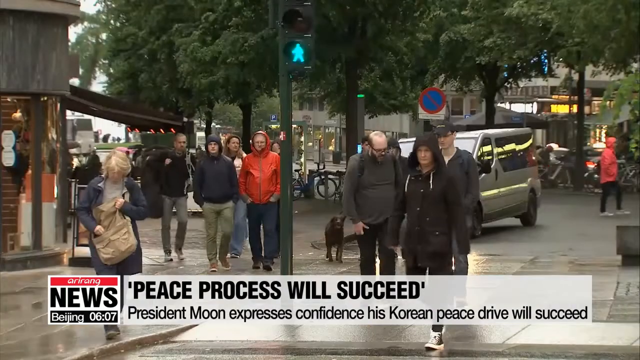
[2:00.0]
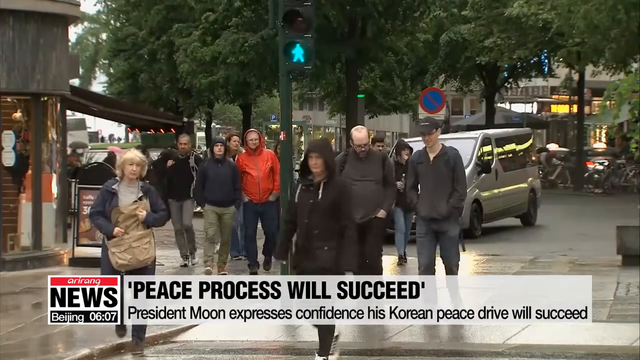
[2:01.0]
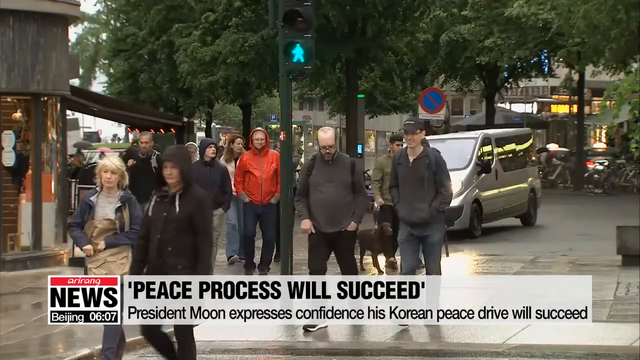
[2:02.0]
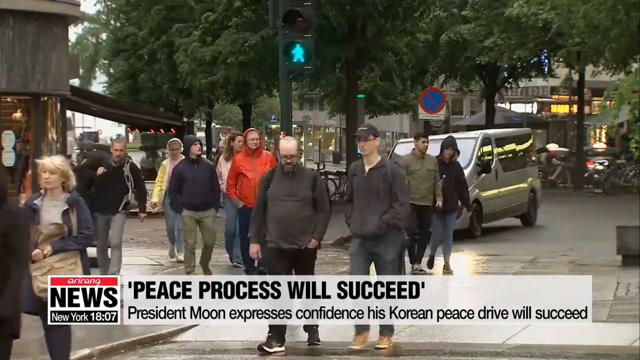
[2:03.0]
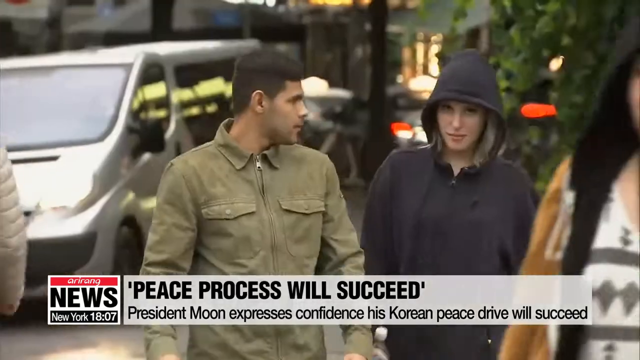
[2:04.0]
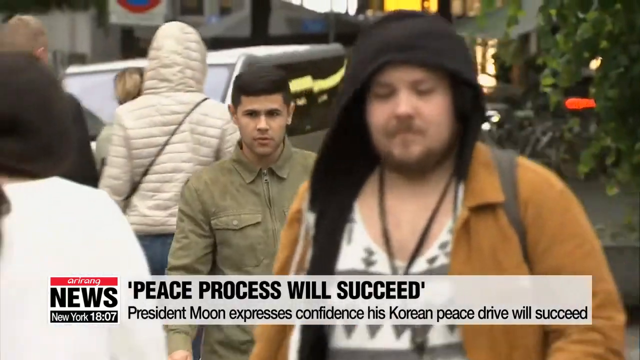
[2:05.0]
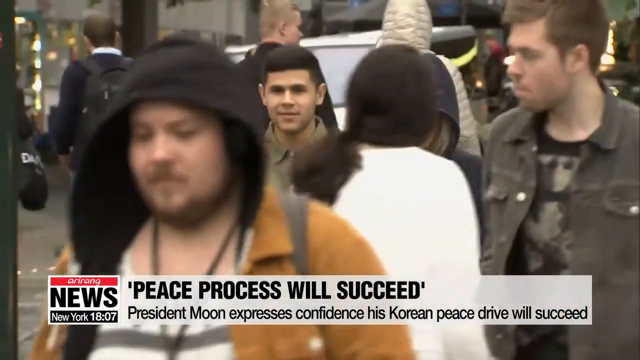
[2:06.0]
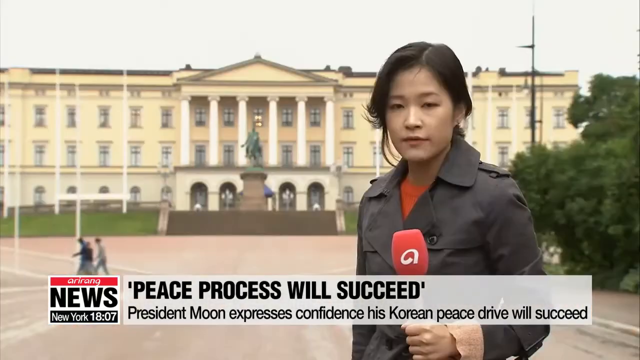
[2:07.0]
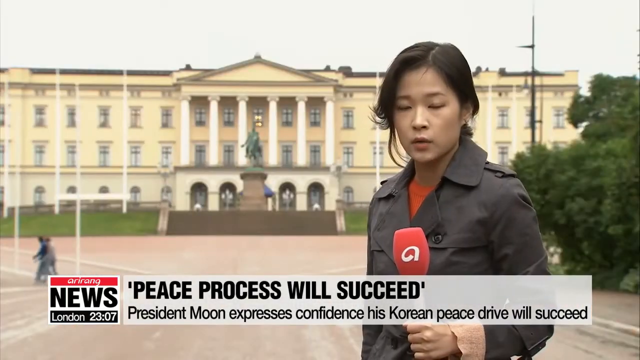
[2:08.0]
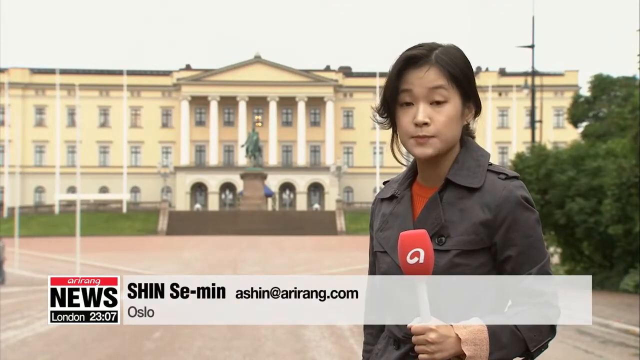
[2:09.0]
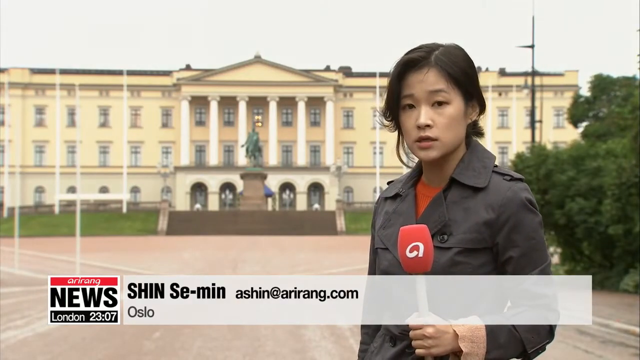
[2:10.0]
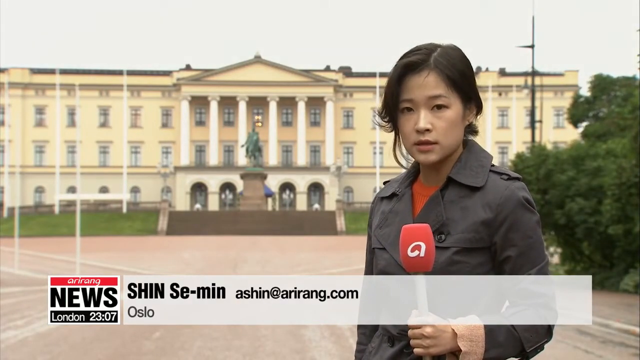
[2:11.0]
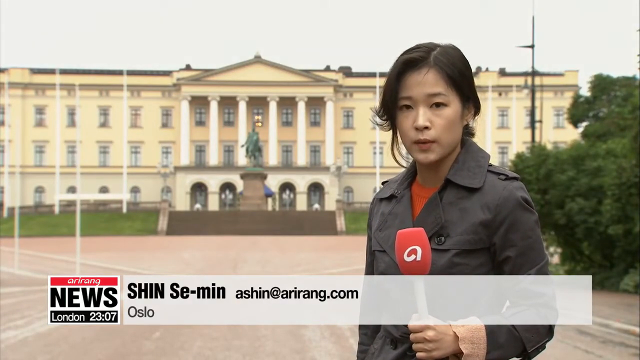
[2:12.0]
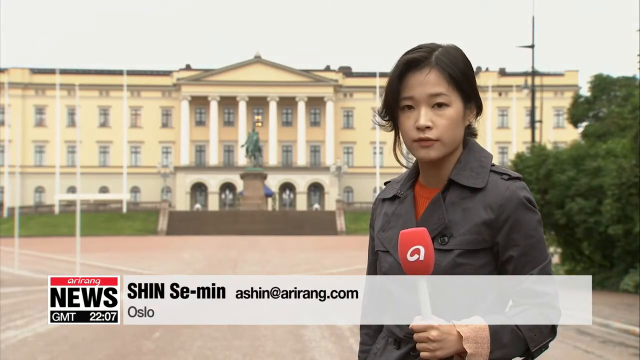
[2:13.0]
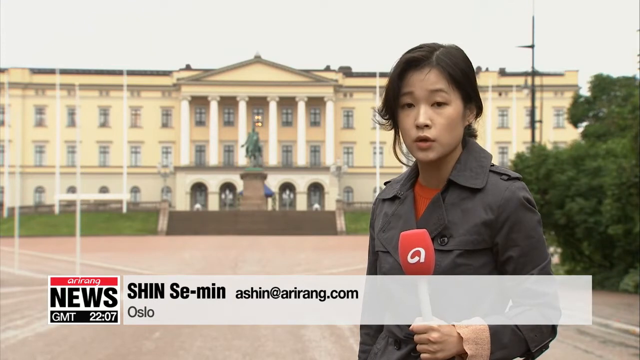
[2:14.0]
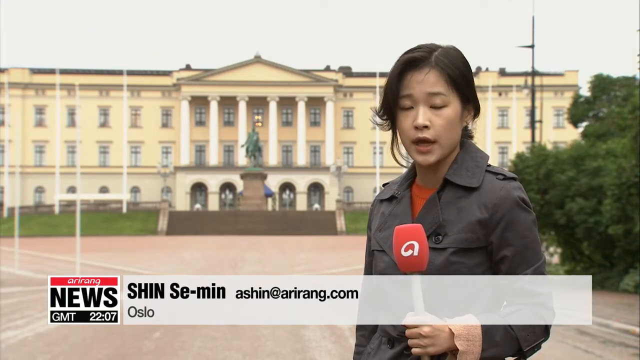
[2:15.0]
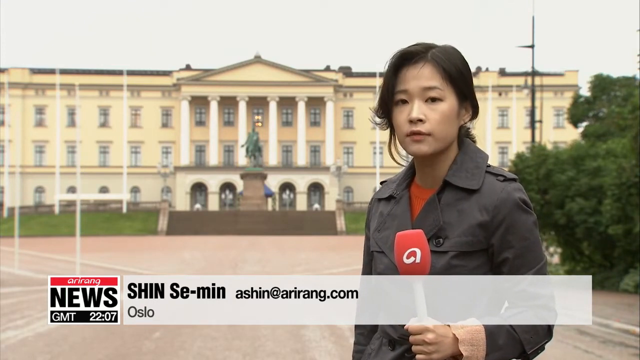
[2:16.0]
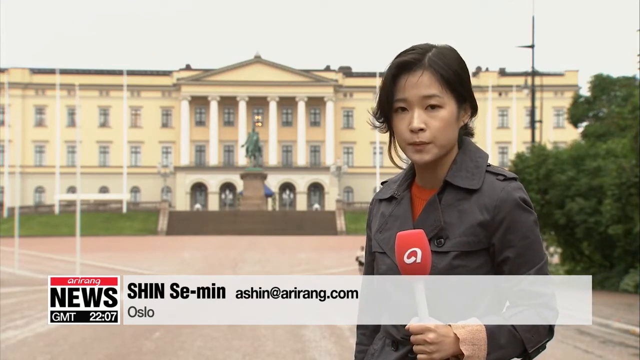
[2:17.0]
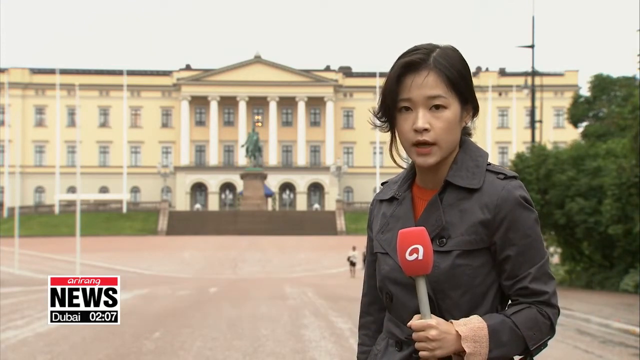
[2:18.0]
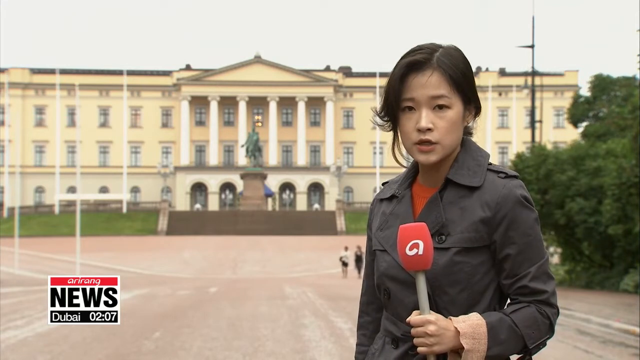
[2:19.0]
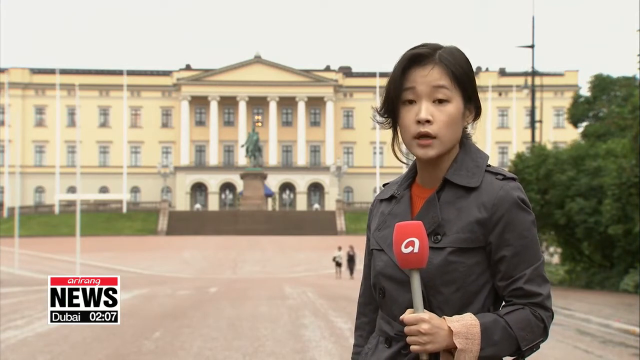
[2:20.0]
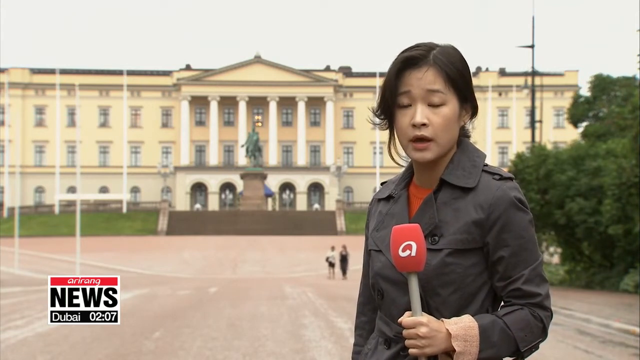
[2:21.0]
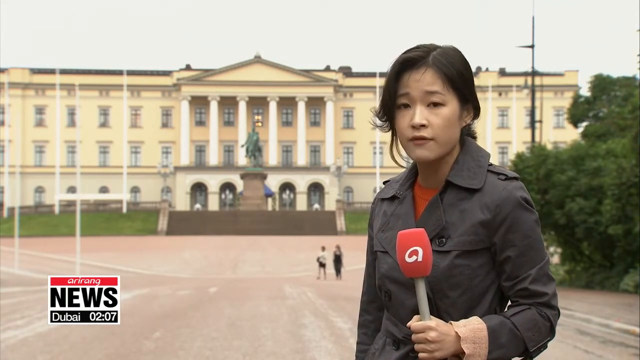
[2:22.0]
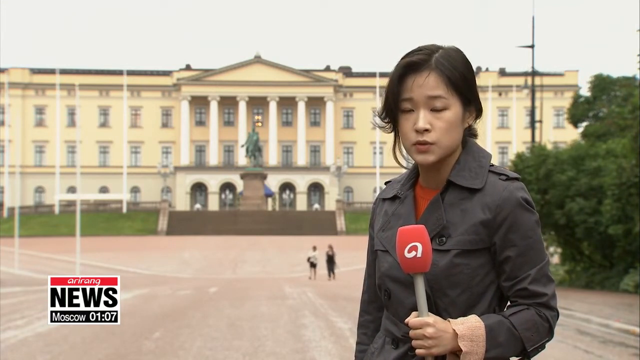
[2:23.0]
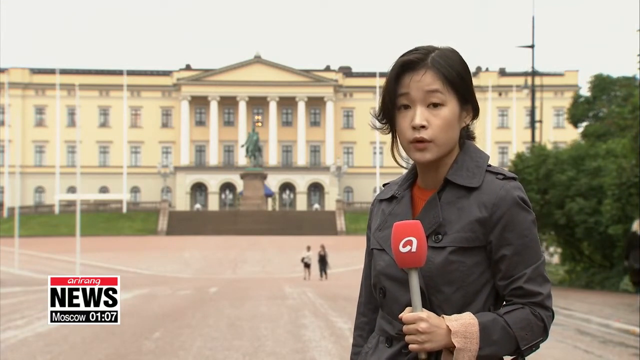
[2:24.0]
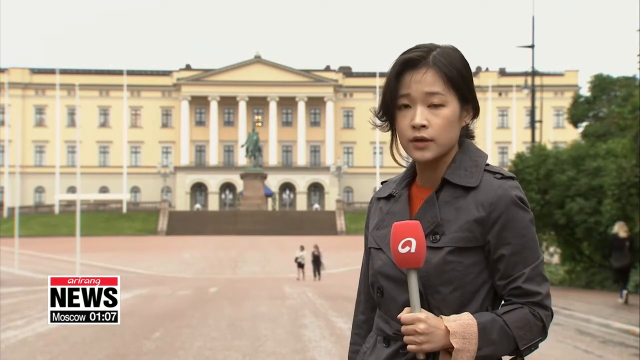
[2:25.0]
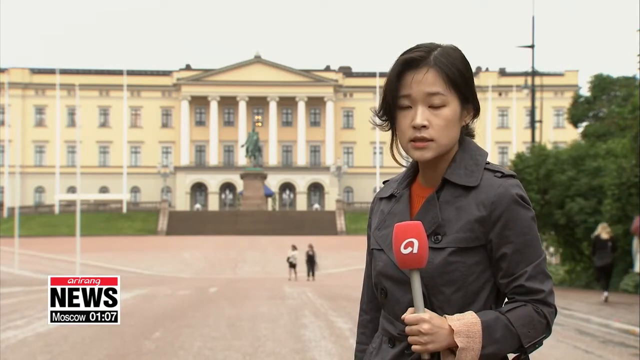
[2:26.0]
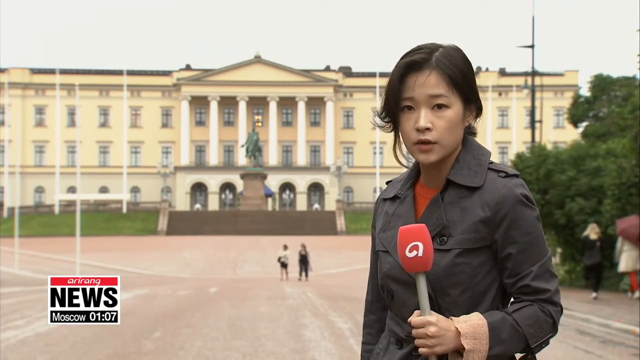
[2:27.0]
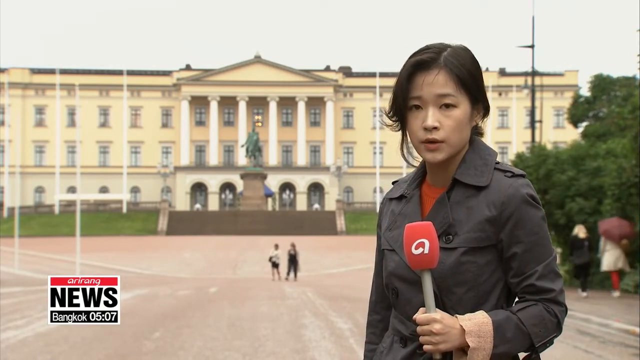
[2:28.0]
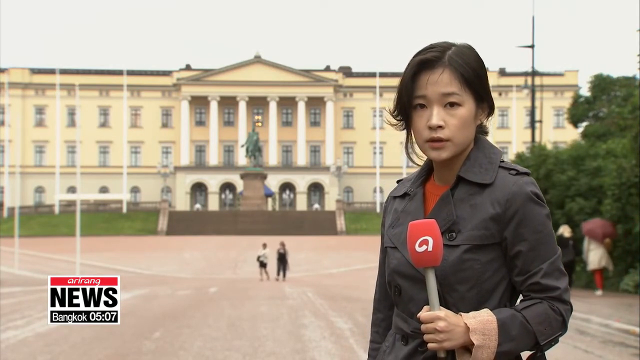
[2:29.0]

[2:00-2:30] Text reads "peace process will succeed" said President Moon, and "President Moon expresses confidence his Korean peace drive will succeed." Pedestrians walk down the streets. A female newscaster reporting from Oslo appears, wearing a brown jacket with an orange inner and her hair tied in a ponytail. She stands by a city hall, talking. Trees are planted where she is standing, and people walk back and forth behind her. A statue of a man stands in front of the hall.